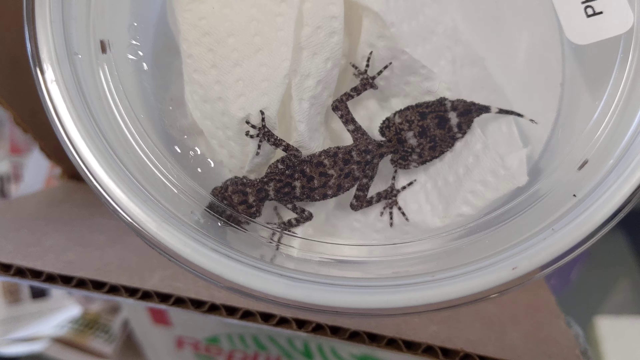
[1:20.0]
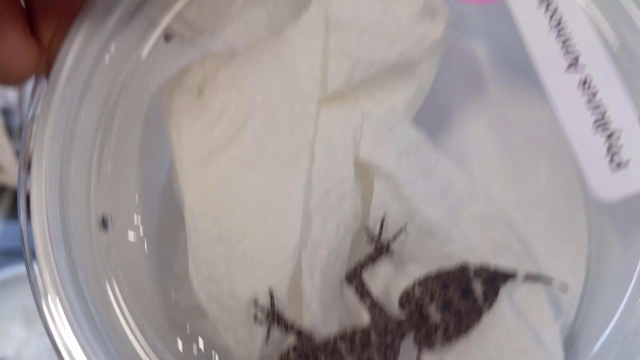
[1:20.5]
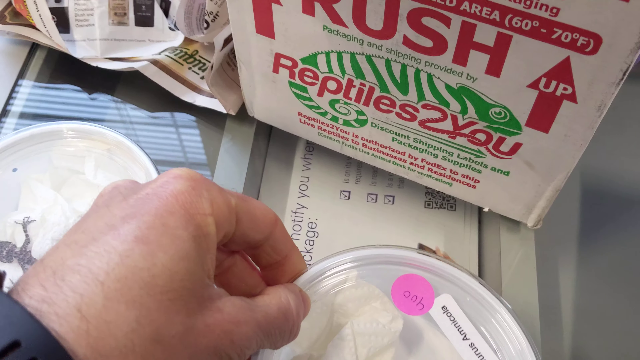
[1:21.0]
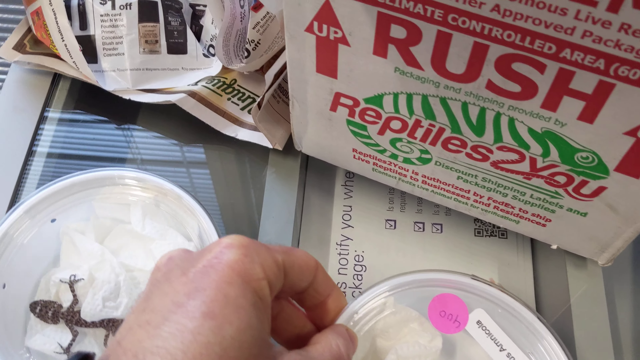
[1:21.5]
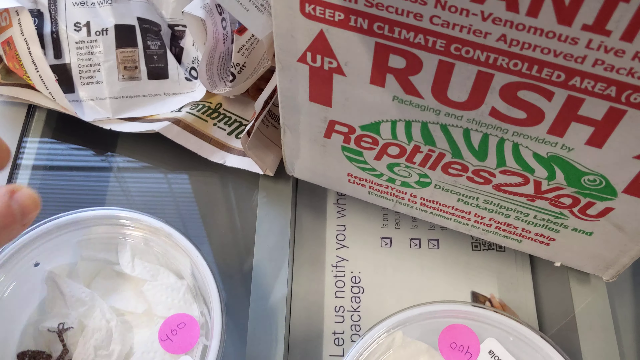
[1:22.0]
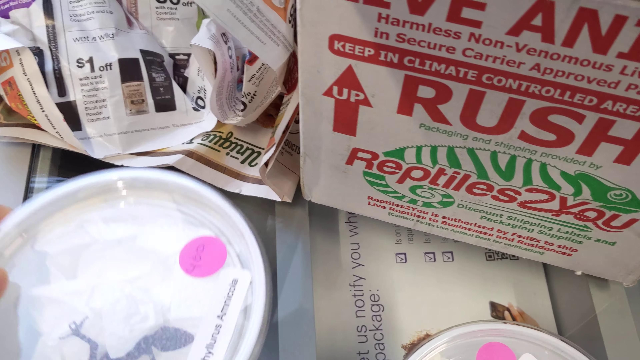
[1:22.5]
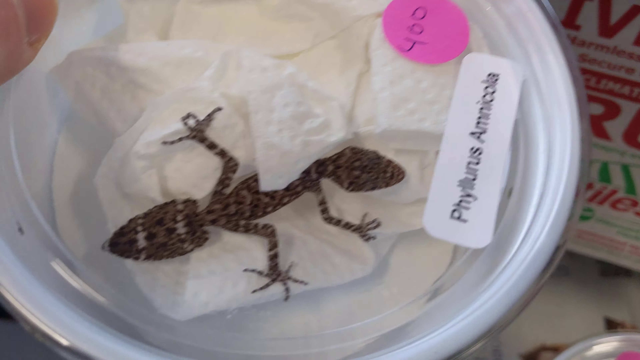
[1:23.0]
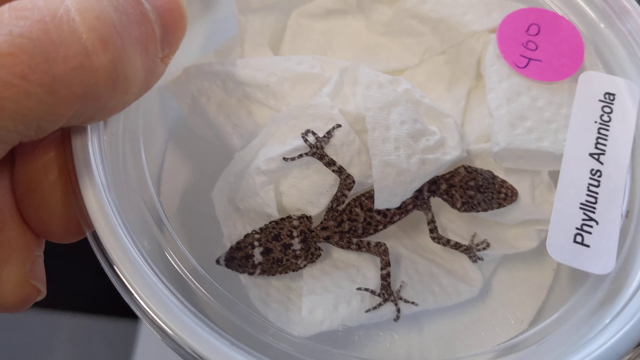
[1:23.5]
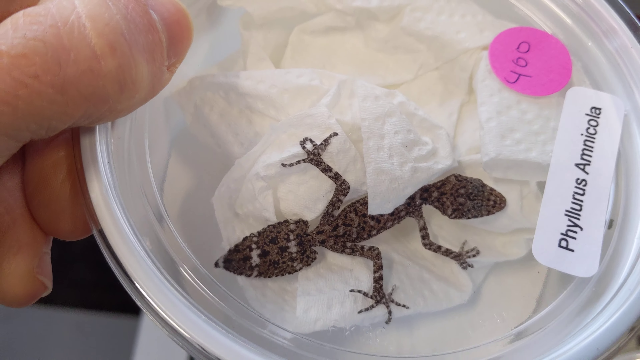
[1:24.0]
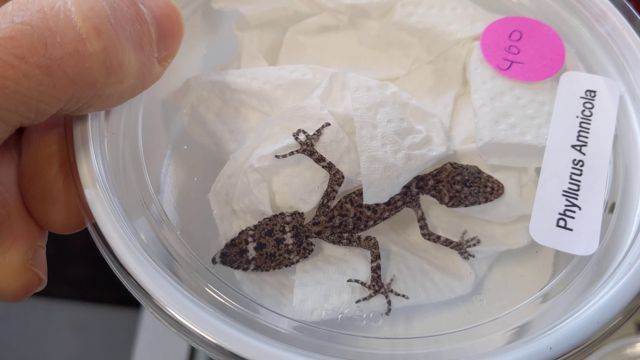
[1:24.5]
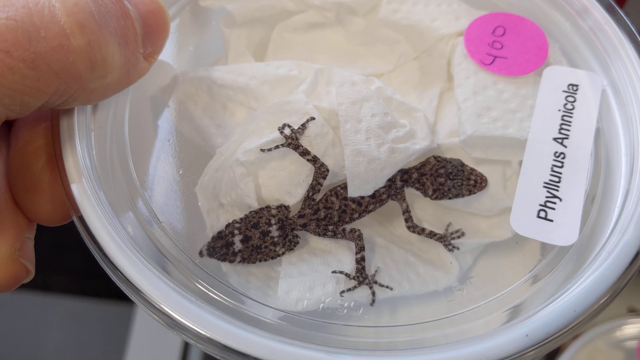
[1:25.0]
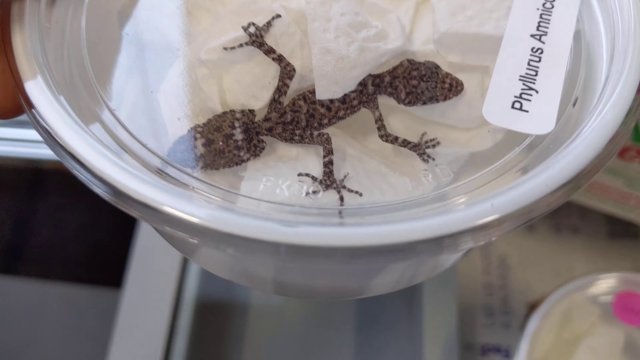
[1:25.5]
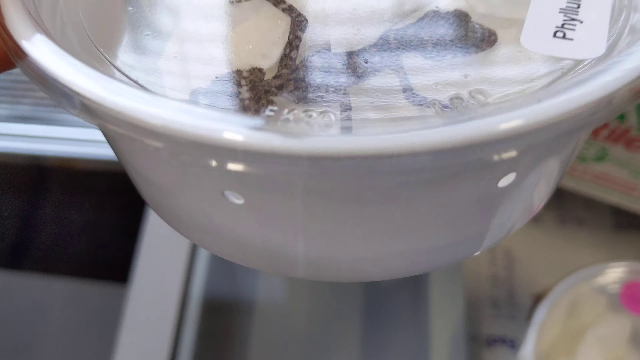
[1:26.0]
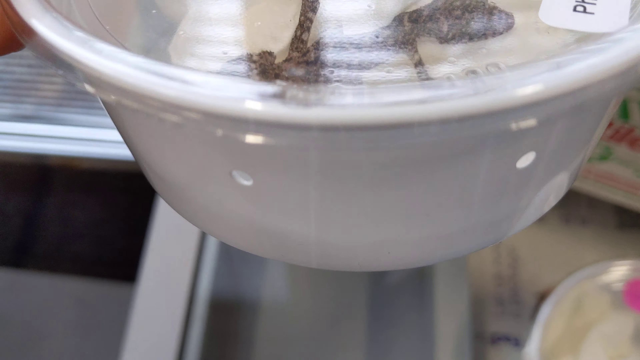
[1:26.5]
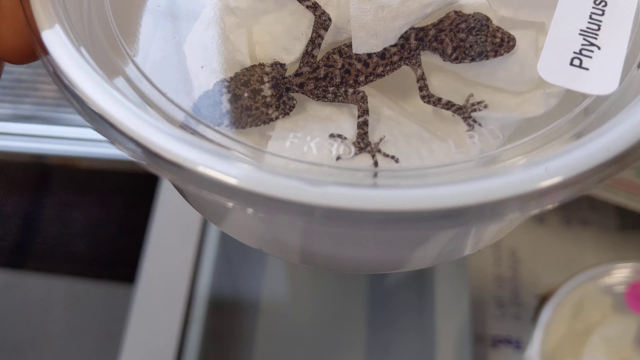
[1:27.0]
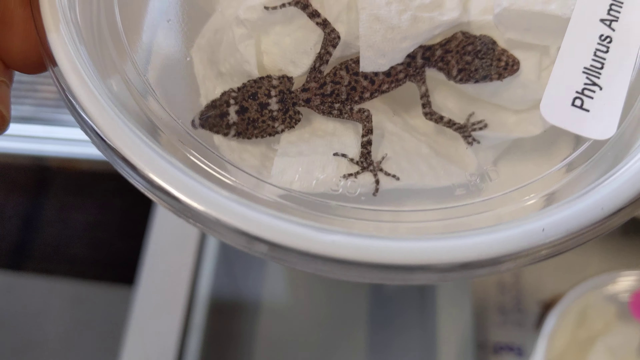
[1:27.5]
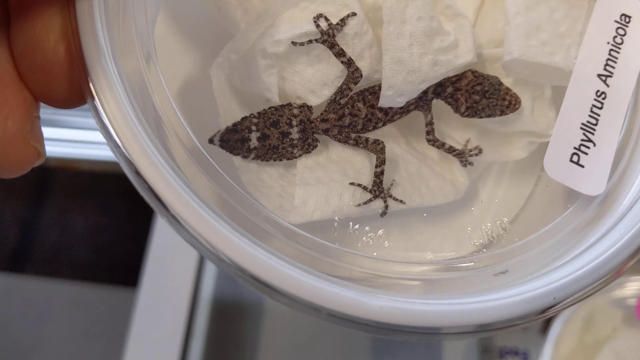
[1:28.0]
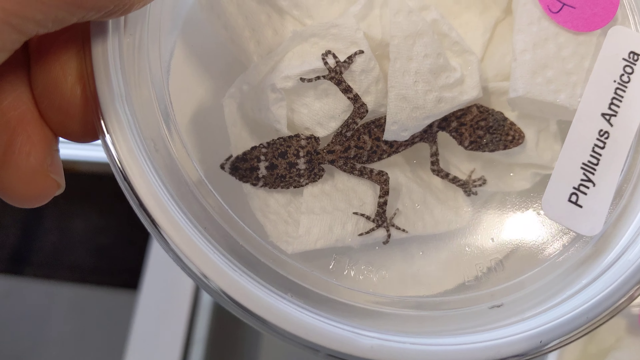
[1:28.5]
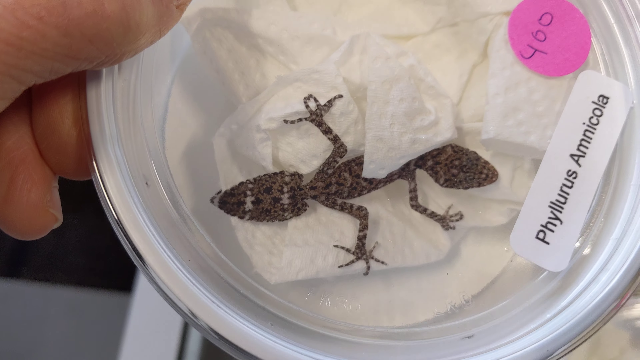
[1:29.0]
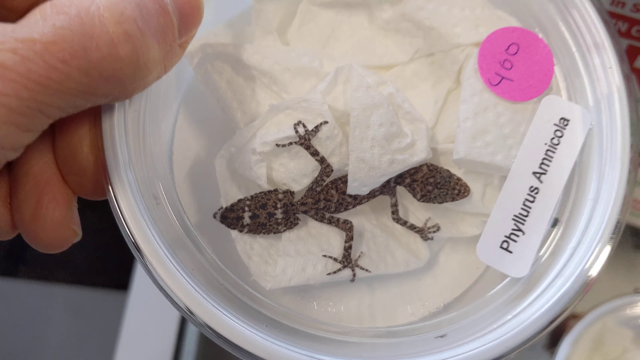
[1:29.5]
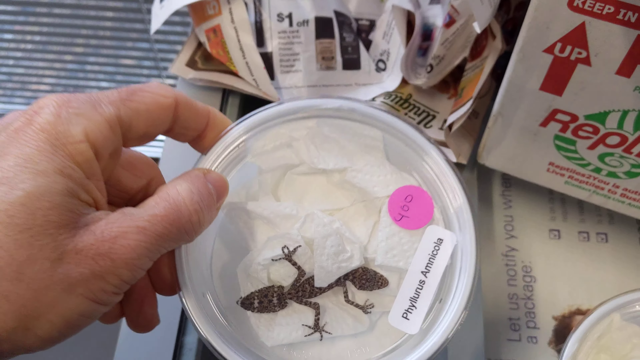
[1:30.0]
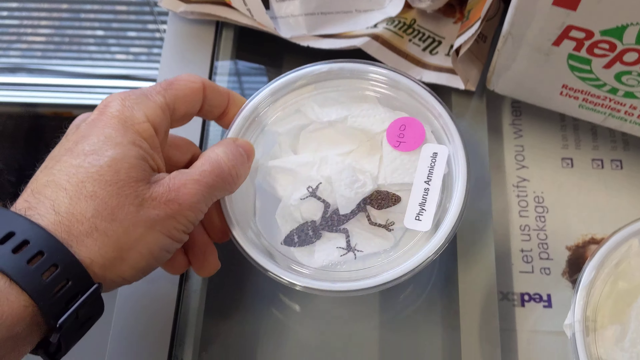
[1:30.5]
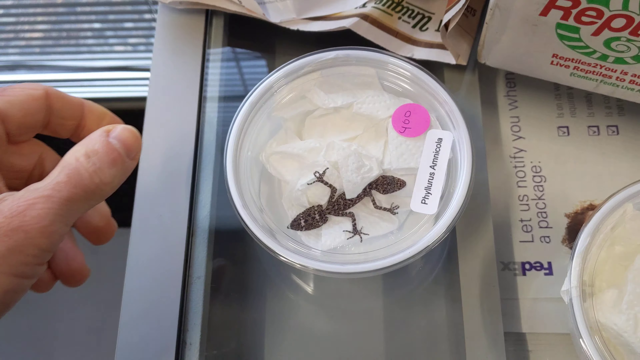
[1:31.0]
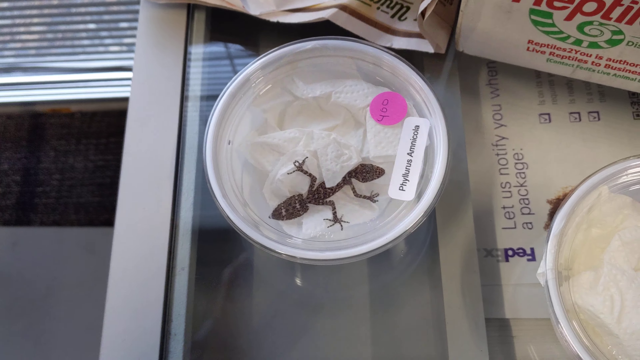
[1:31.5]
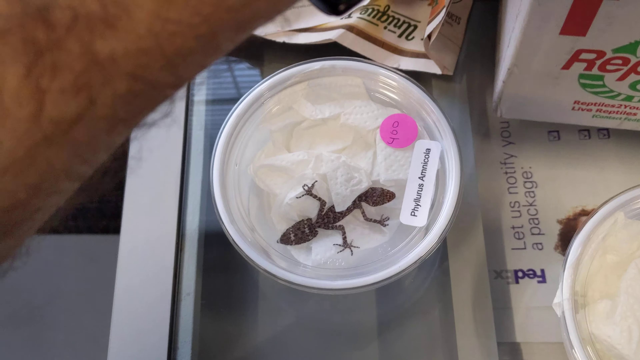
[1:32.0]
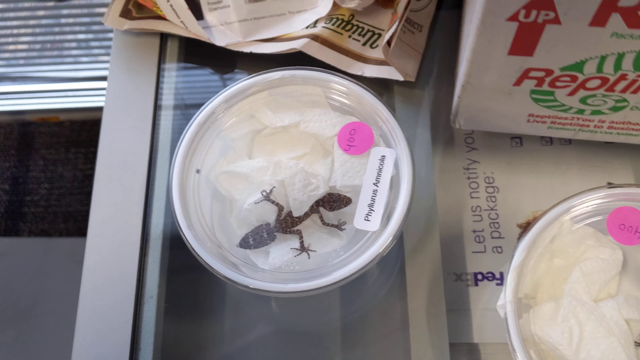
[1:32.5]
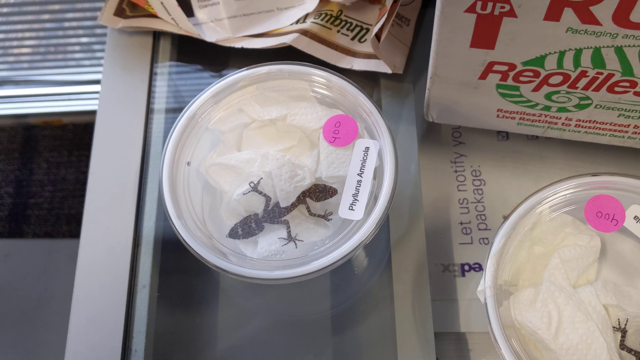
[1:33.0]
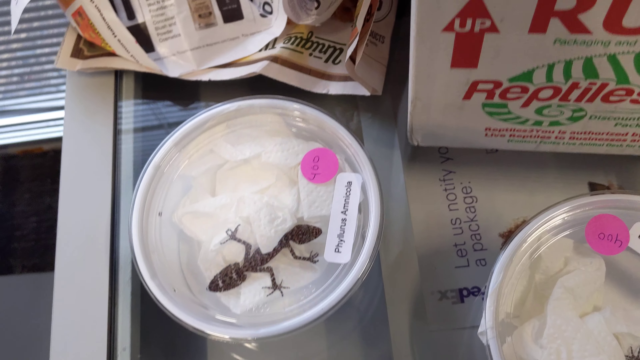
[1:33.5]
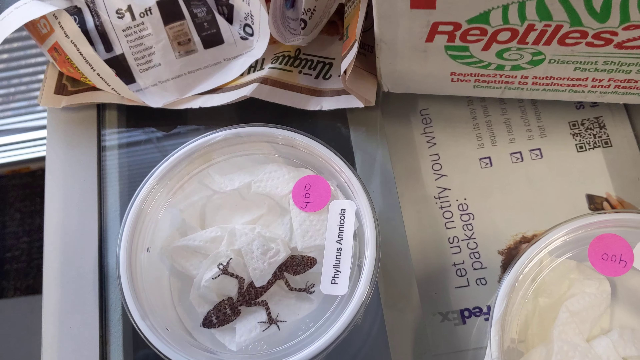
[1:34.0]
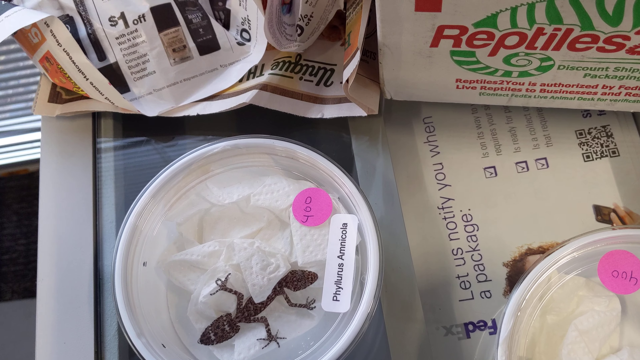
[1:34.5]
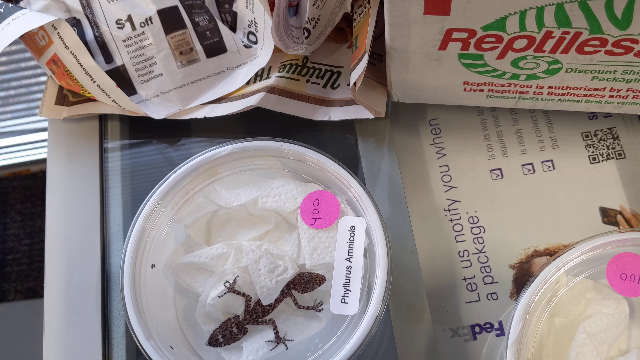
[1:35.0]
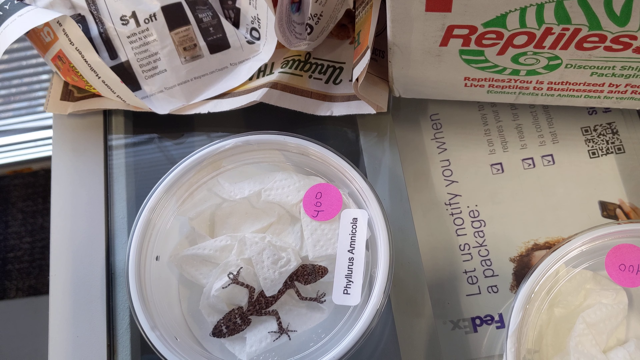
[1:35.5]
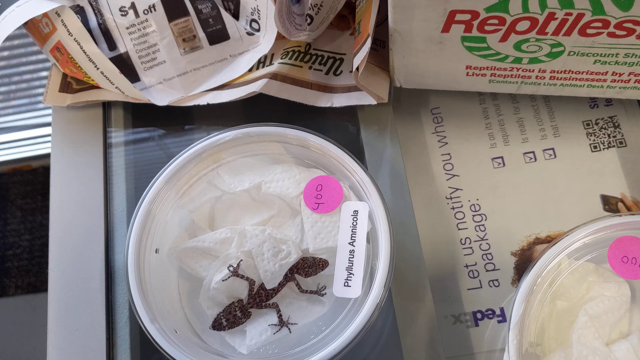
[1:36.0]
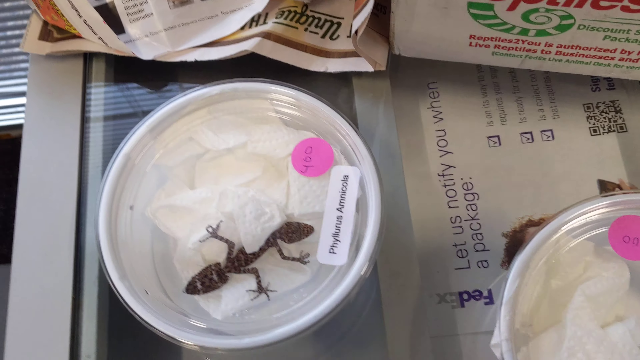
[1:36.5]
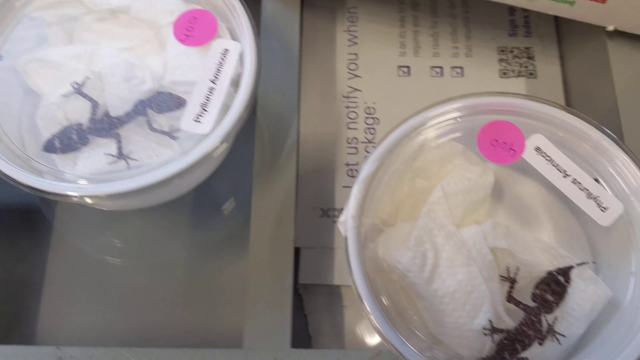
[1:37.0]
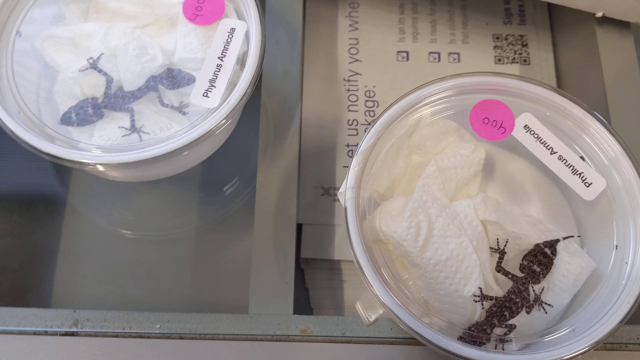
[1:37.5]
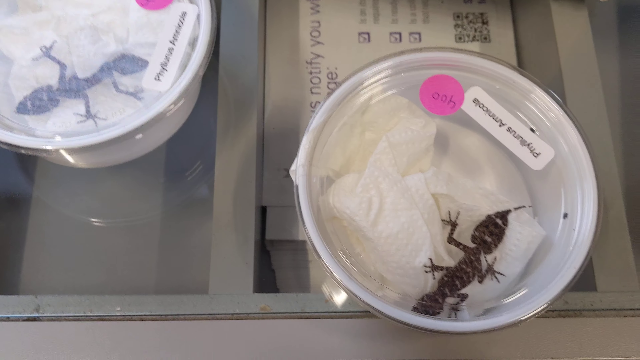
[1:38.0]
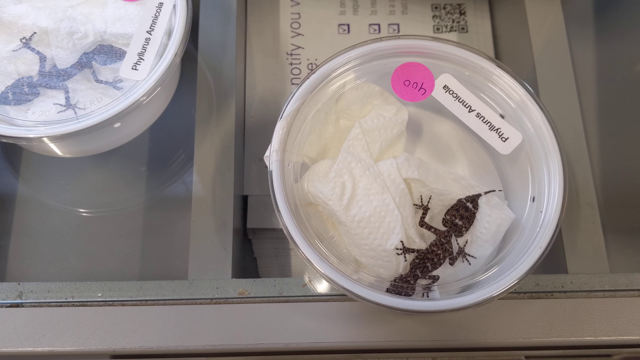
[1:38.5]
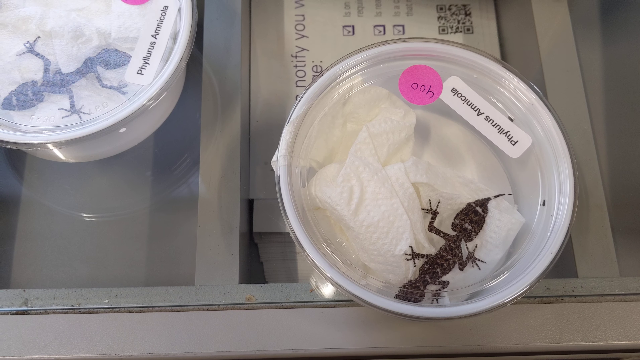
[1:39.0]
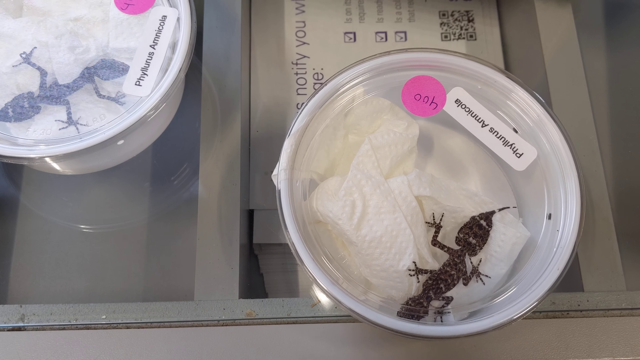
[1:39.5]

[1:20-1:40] The tub comes into view and is placed down on a glass surface in front of the box. The side of the box that was out of view before is now visible, with words all written in red: "keep in climate controlled area rush". There are arrows that say "up", a picture of a green printed chameleon, and the words "Reptiles2you". The person picks up the tub on the left-hand side, which has an amphibian in it, and brings it closer to the camera, tilting it up and down and then tilting it more so that holes on the side of the tub can be seen. They place it back down on the glass surface. Something is underneath the glass: the word "FedEx", upside down from this view, along with the text "let us notify you when" and "a package". The person's hand moves the box around in the background, and the camera then moves to include the tub on the right-hand side of the screen.